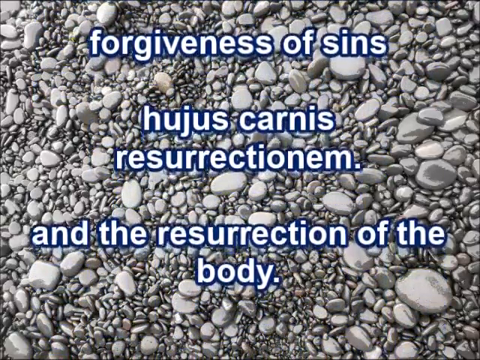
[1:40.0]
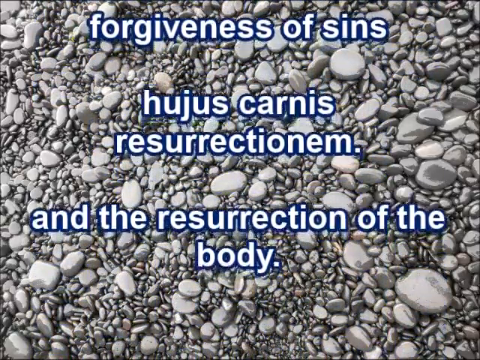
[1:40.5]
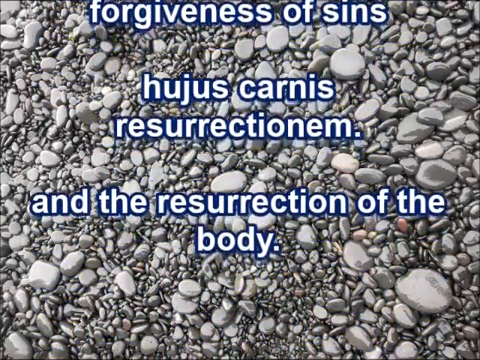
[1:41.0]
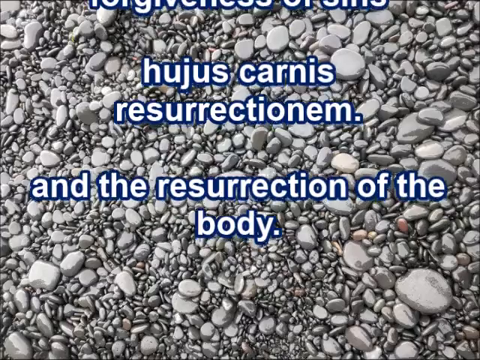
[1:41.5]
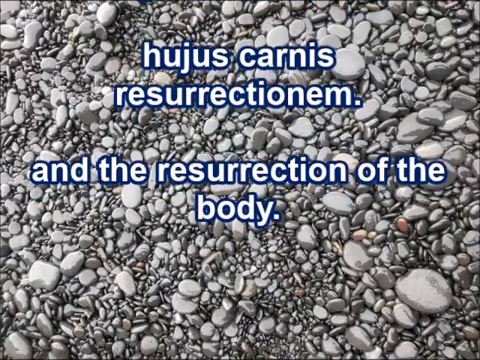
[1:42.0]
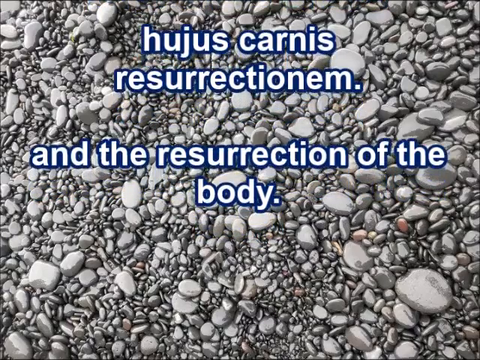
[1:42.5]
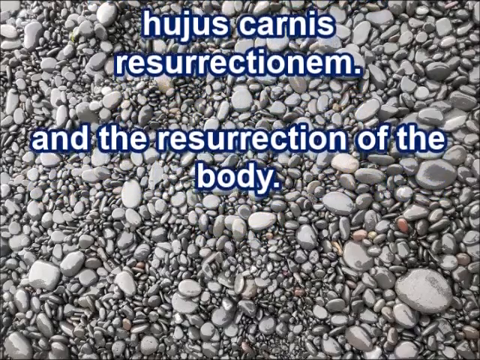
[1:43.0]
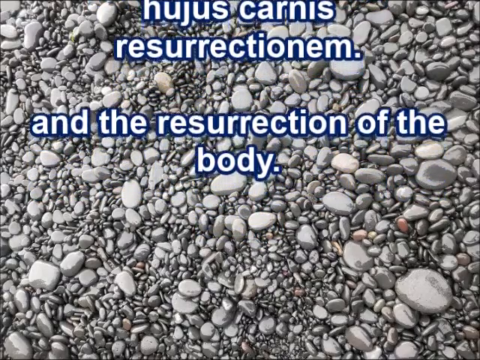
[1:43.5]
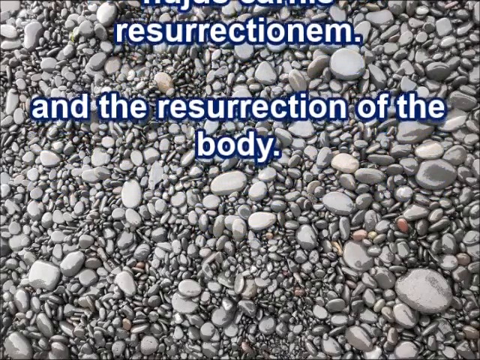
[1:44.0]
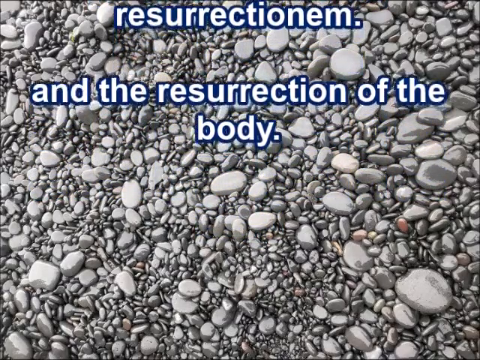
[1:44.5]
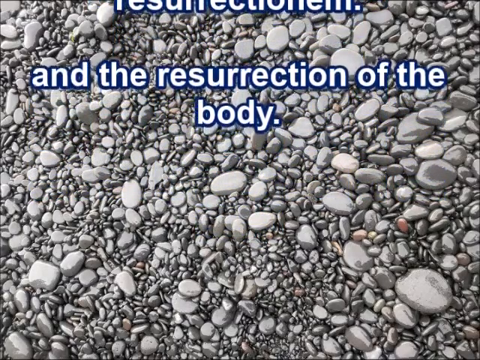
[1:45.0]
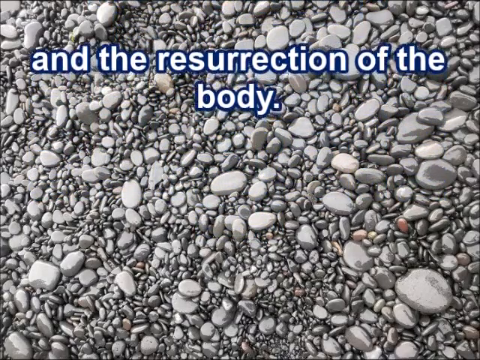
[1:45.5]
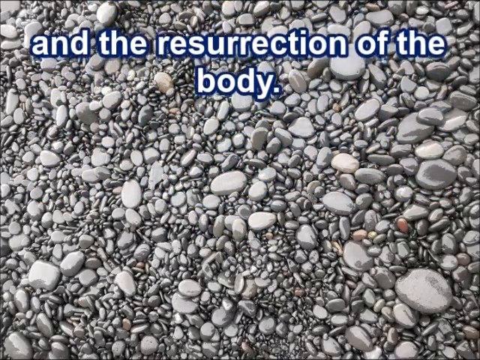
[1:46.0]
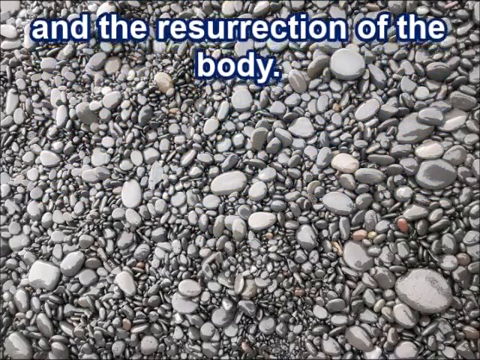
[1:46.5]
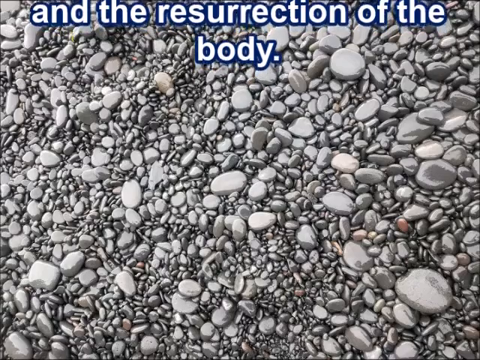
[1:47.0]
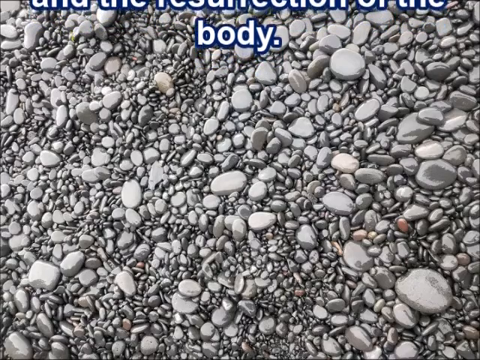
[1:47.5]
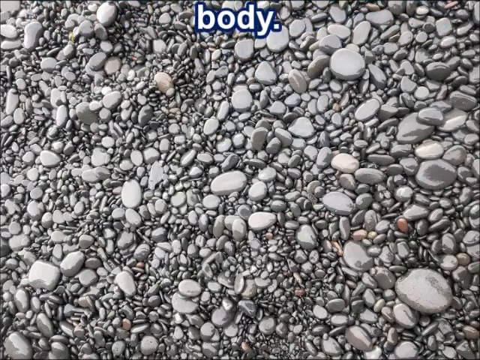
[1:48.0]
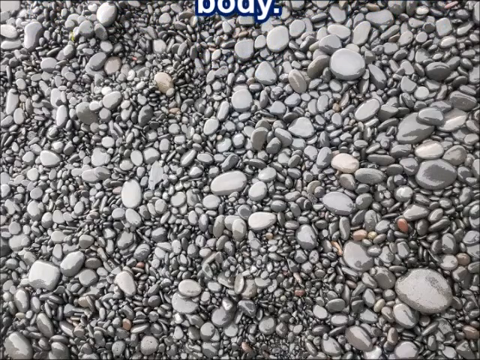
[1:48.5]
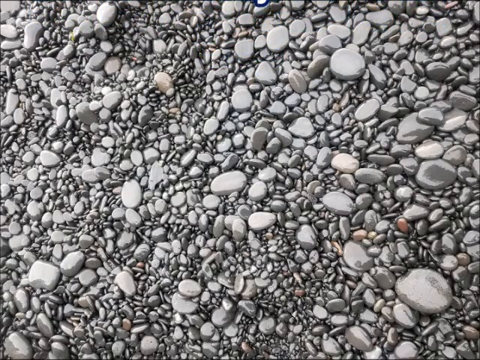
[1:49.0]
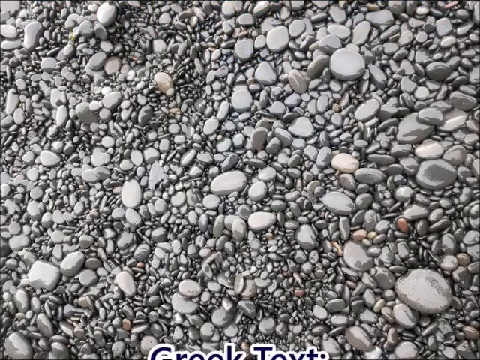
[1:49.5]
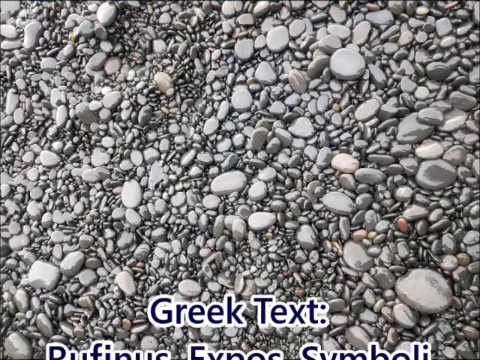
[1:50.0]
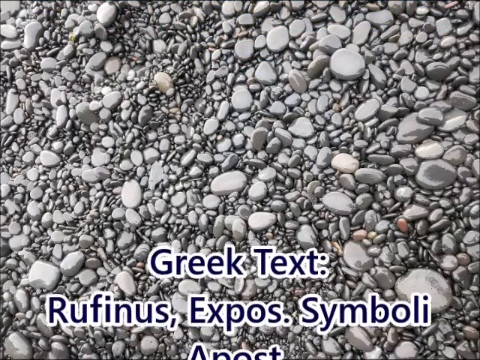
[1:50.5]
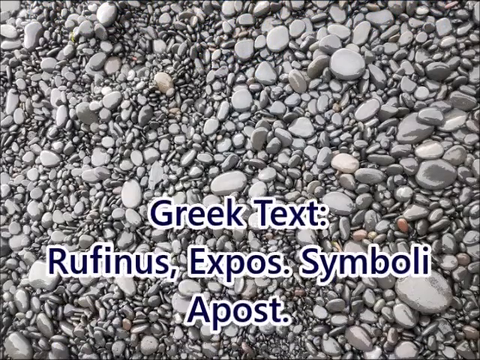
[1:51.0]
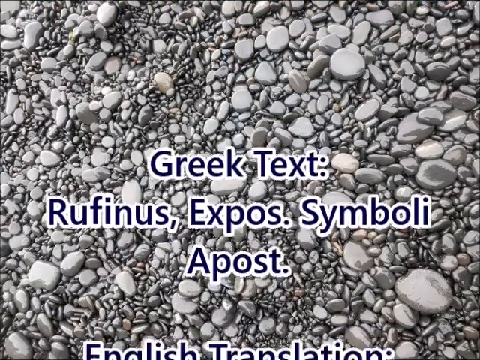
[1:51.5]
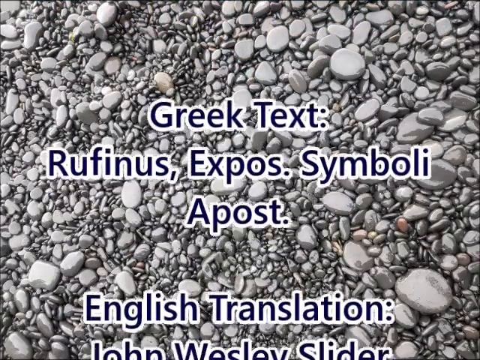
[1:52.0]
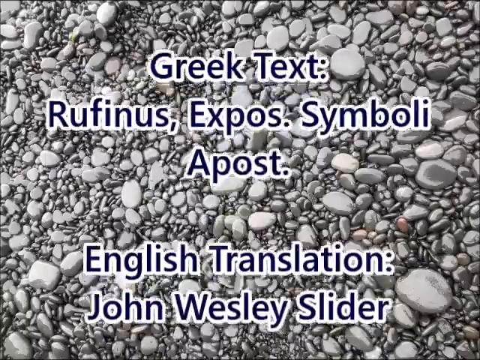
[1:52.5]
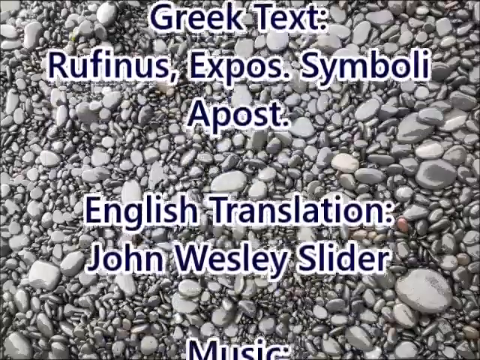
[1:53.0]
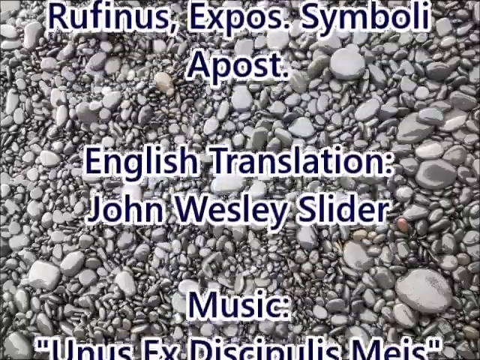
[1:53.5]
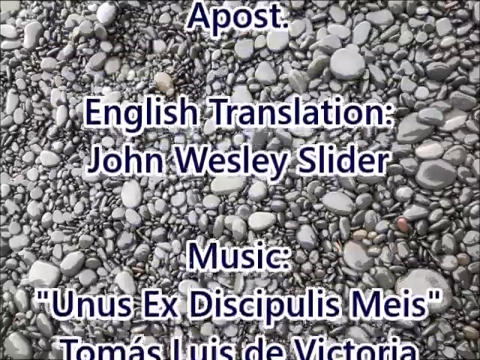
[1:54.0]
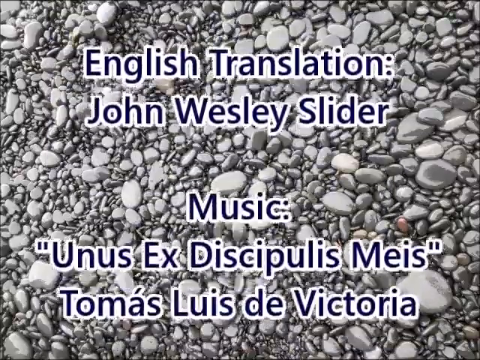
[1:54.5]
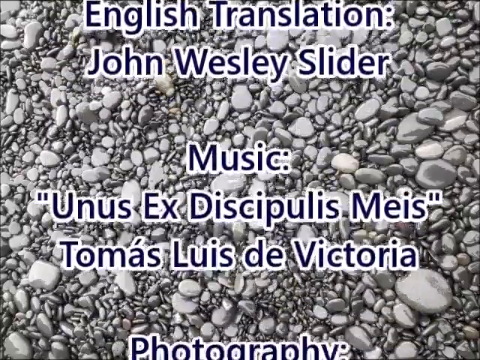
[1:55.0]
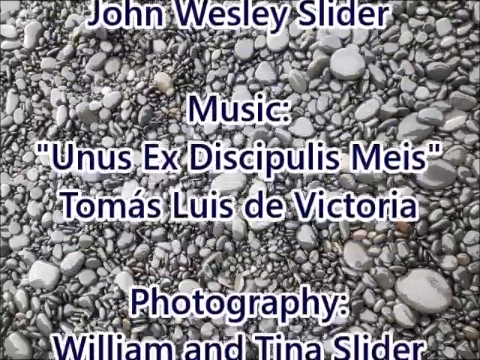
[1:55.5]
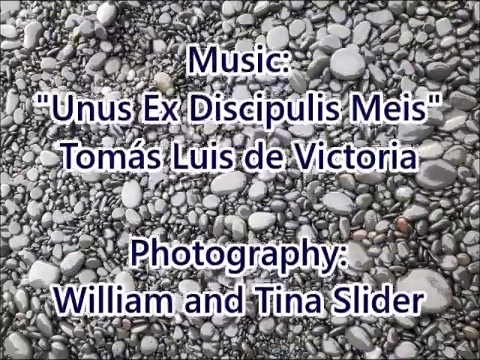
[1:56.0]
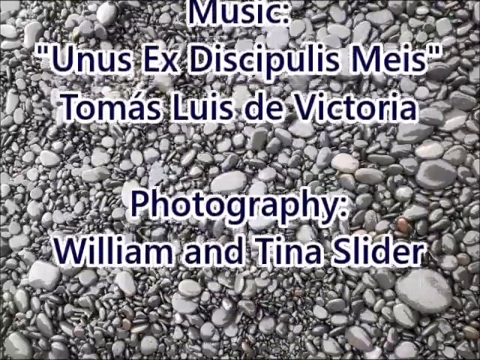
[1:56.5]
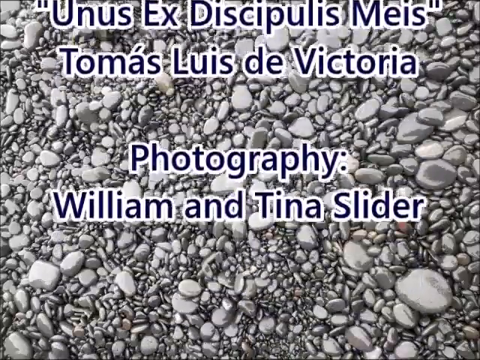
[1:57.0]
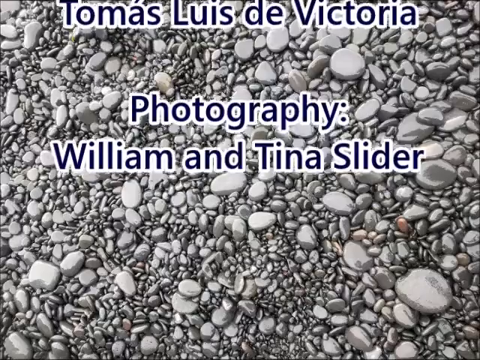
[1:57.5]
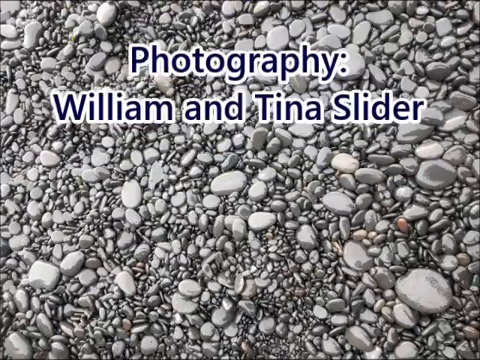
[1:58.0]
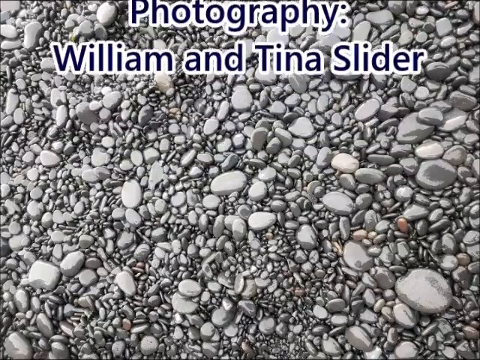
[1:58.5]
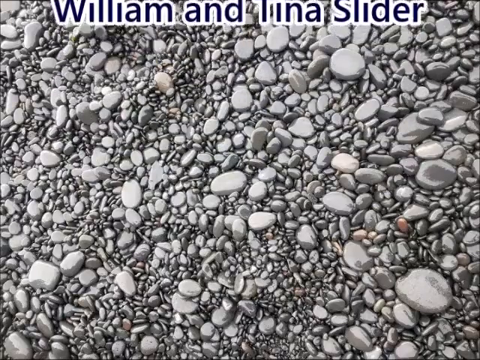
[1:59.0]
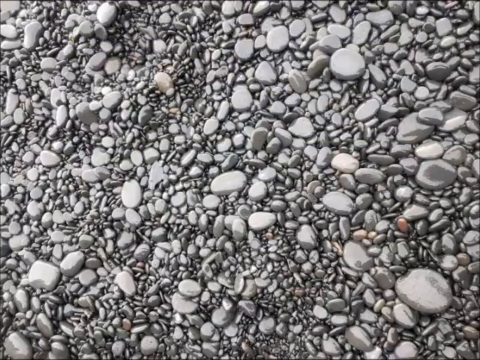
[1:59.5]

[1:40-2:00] The camera faces the ground, where many pebbles and small stones are scattered throughout and stacked on top of each other, ranging from very small pebbles to larger stones in colors from white and light gray to dark gray. In the middle of the screen, words move from the bottom to the top, with Spanish words intermixed with English words providing a translation. The first English words read "and the resurrection of the body"; these words make their way up through the top of the screen. New words then appear: "Greek text, rufinus expos, symboli apos", followed by an English translation that says "John Wesley slider". The text then says "music, unus ex disipulis mice". Credits for photography to William and Tina Slider follow, and then the video cuts off and ends.